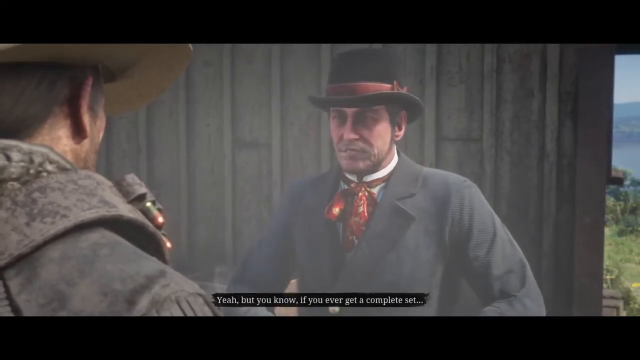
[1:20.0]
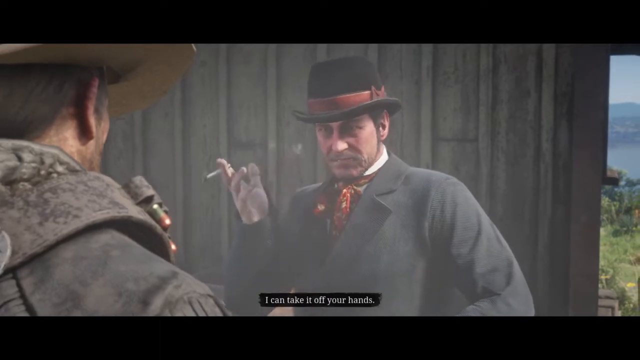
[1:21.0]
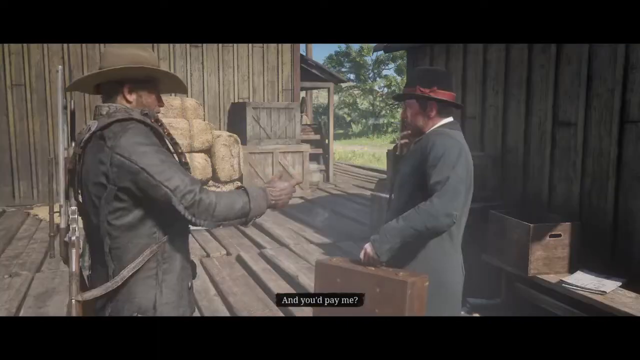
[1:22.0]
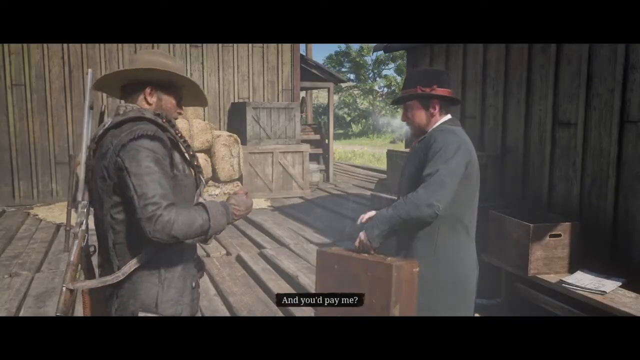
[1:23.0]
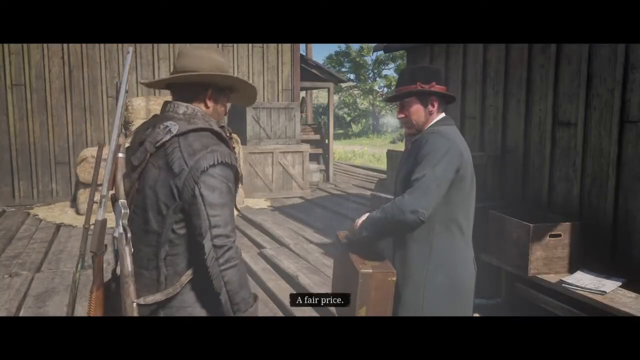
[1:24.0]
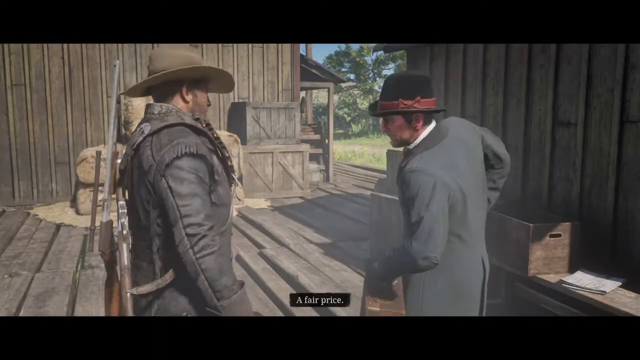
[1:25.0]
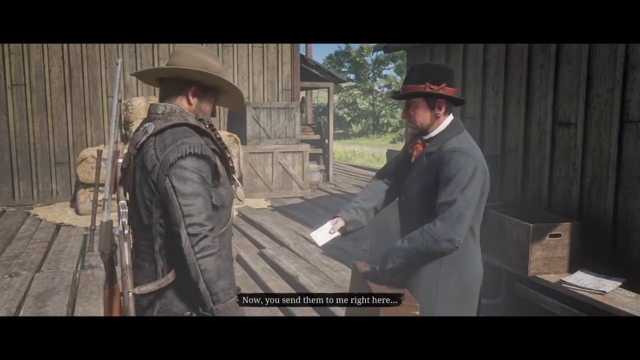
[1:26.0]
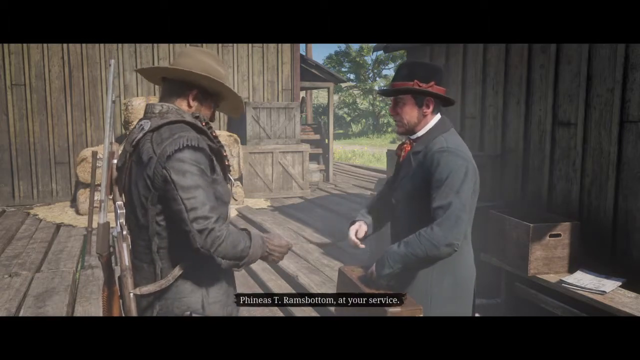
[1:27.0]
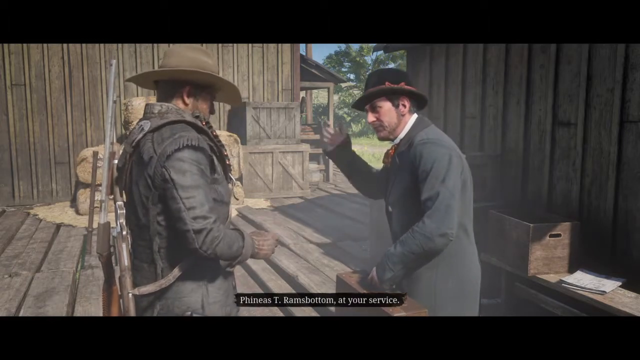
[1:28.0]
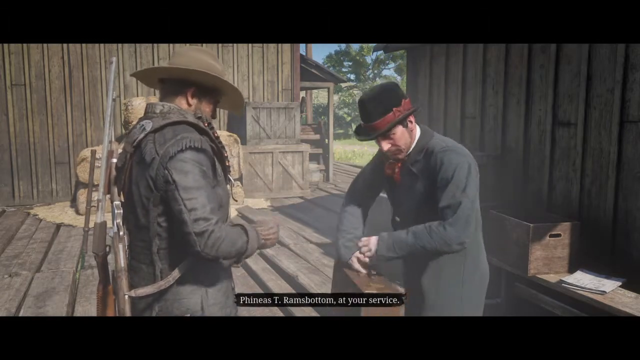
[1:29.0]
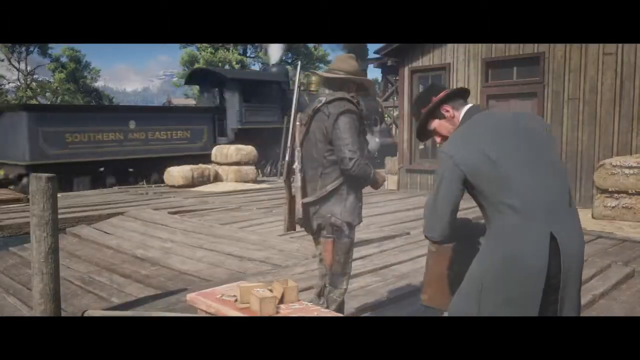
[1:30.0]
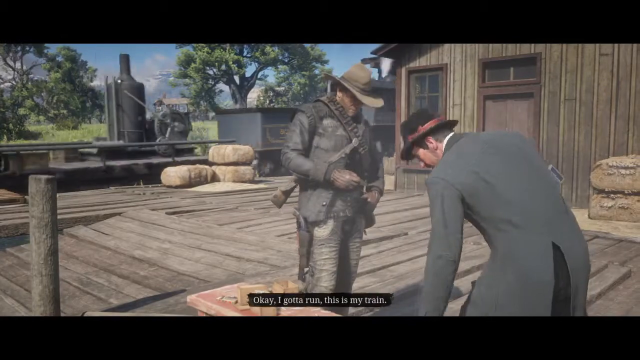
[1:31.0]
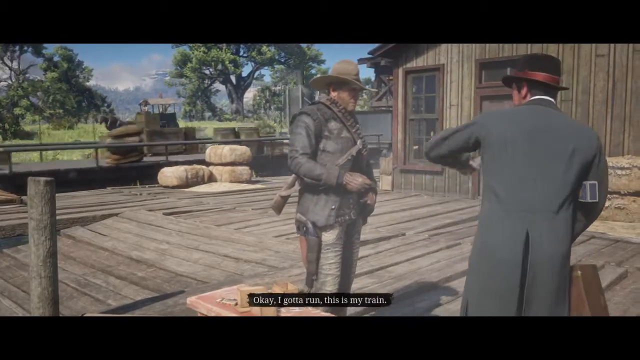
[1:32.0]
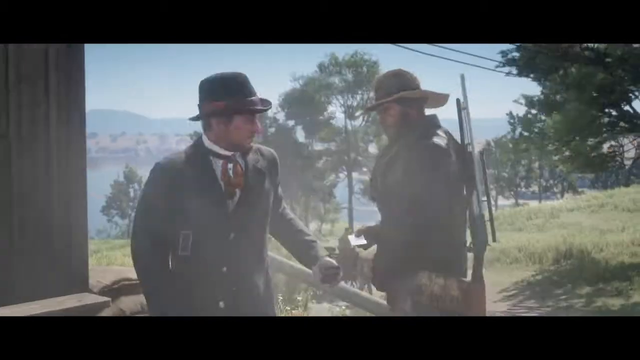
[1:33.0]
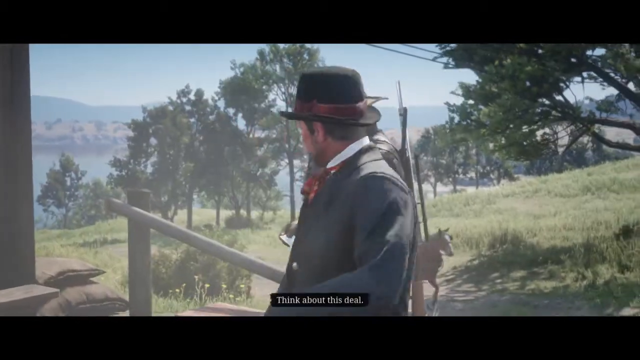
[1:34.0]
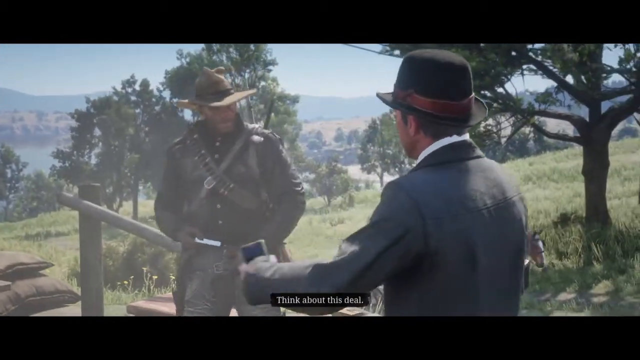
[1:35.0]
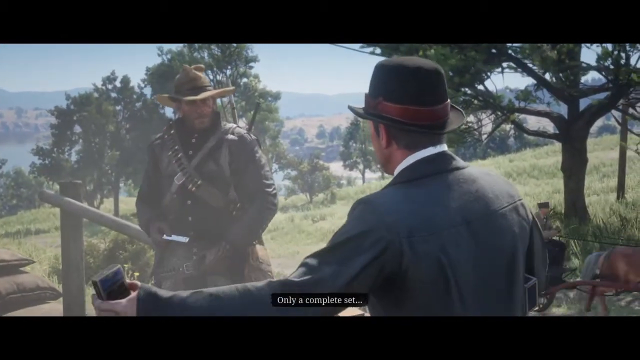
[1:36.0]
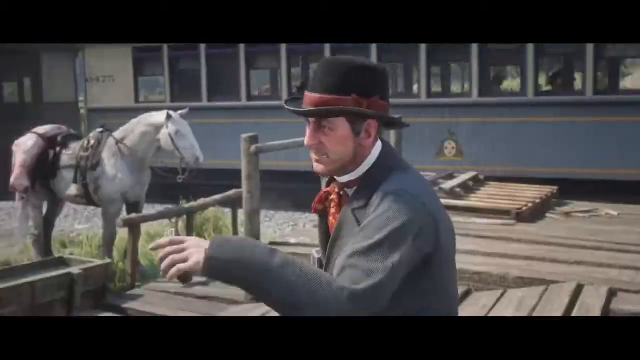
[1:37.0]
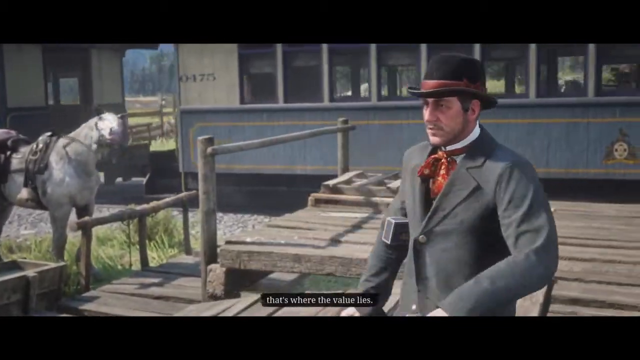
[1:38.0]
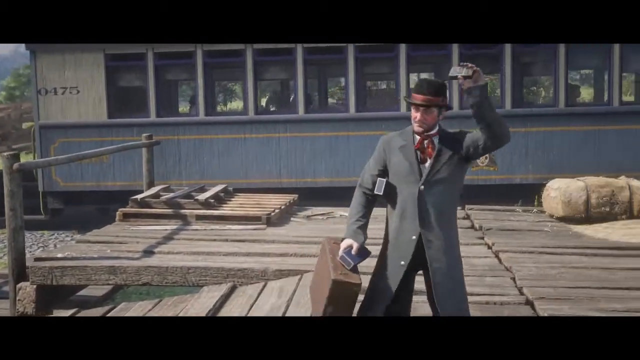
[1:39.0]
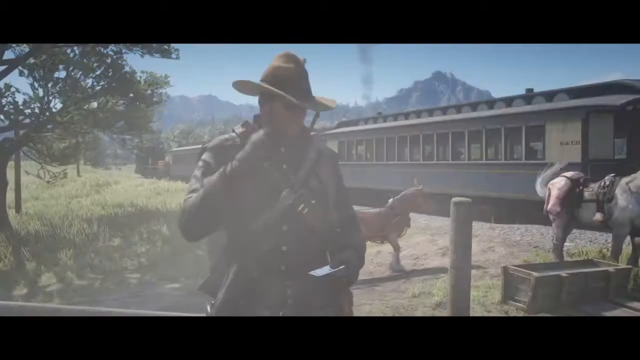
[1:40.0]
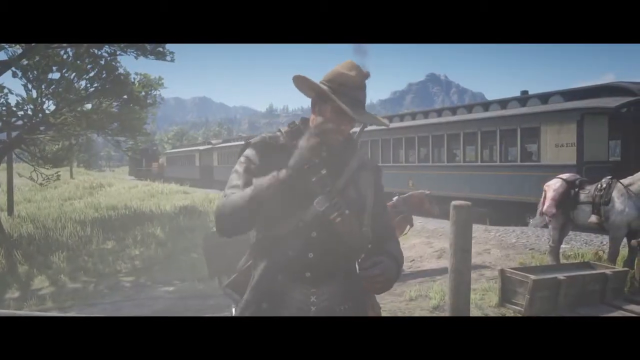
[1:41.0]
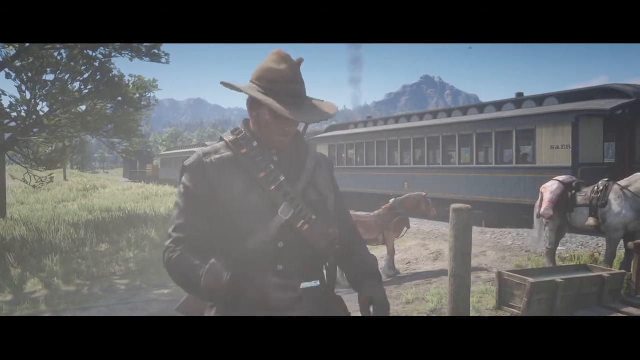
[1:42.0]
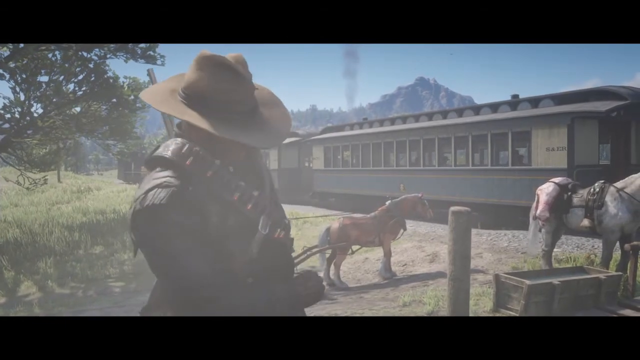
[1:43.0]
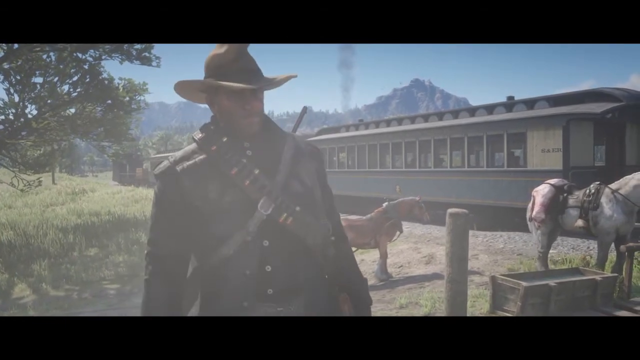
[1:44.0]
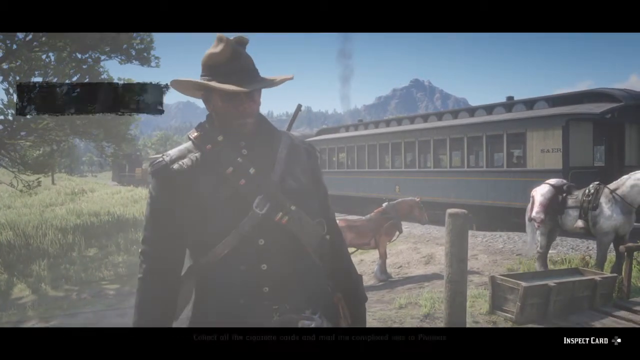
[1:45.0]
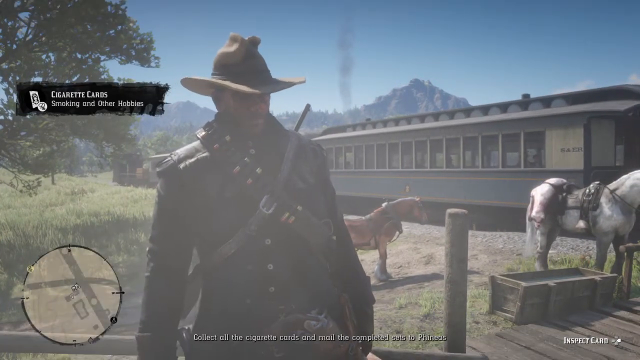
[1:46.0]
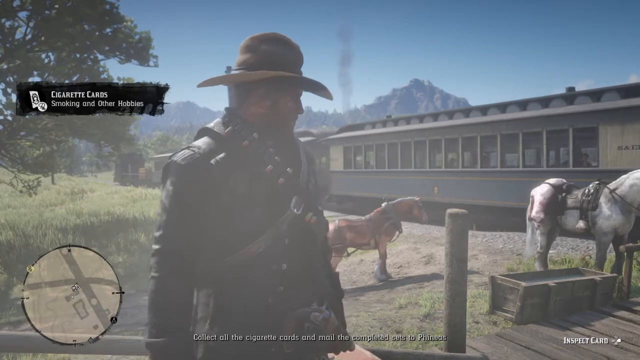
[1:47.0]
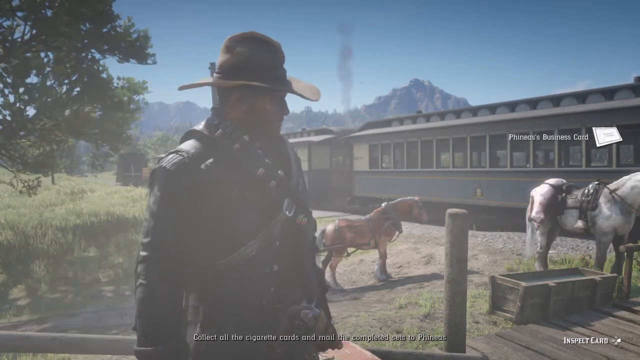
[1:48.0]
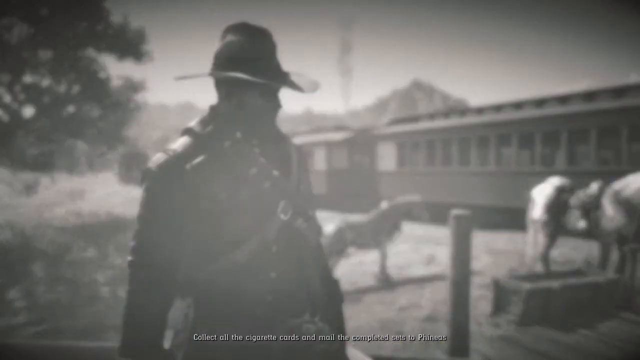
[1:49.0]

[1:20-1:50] The man in the cowboy hat says, "you'd pay me?" and the other man responds, "a fair price." Behind them on the wooden deck are two wooden buildings, with wooden crates and hay bales on the sides of the buildings. The man in the top hat hands the other man a card, saying "you send them to me here," and gives his name, Phineas T. Ramsbottom. In the background, a train comes into the station. He says, "okay, gotta run, this is my train," picks up his belongings, and goes on his way, saying "look me up, okay, think about this deal." He waves goodbye, and a caption comes up to the left of the man that reads "cigarette card, smoking, and other hobbies."